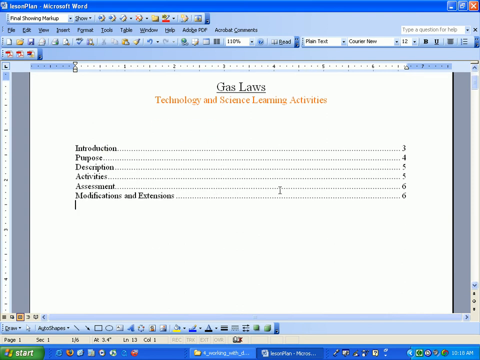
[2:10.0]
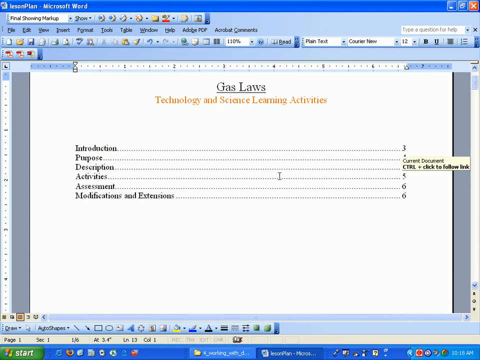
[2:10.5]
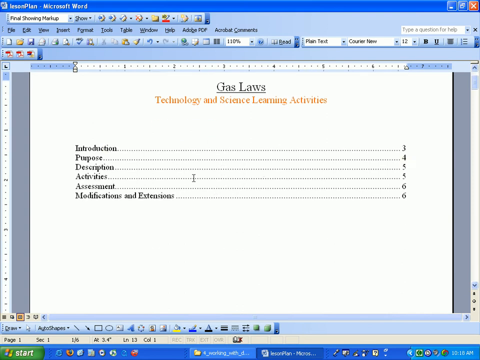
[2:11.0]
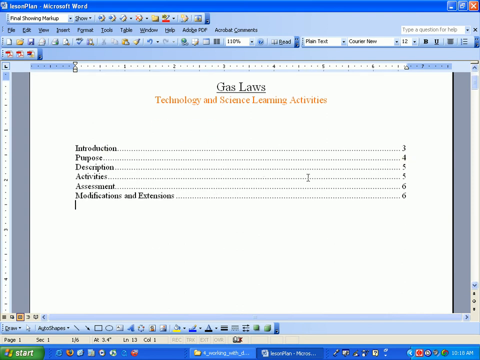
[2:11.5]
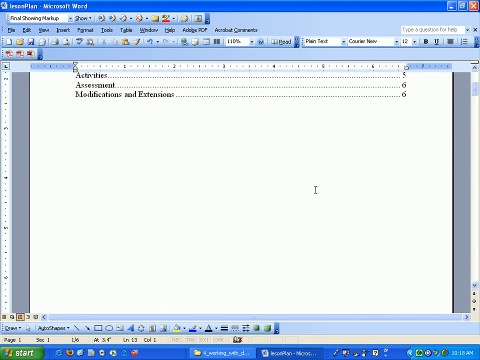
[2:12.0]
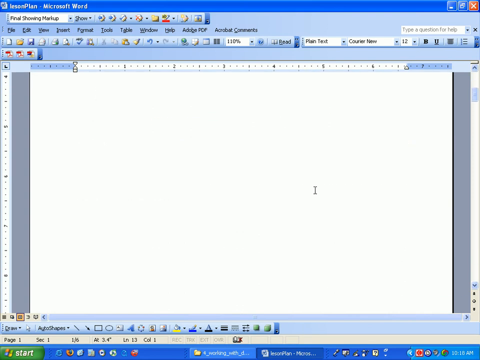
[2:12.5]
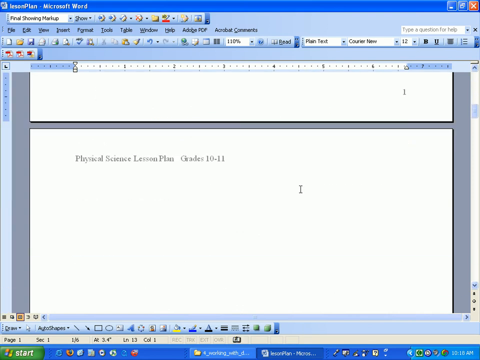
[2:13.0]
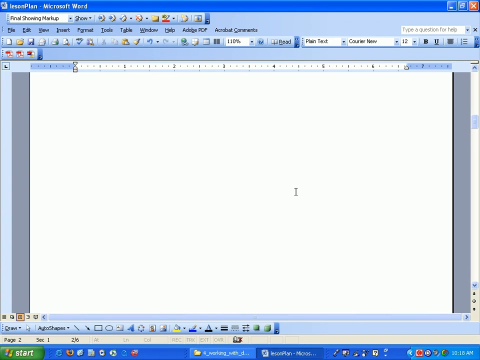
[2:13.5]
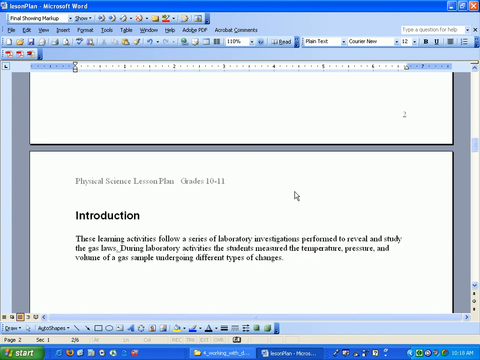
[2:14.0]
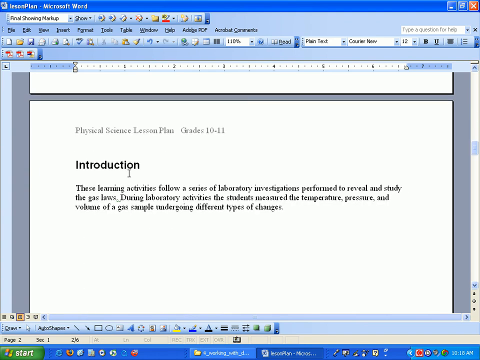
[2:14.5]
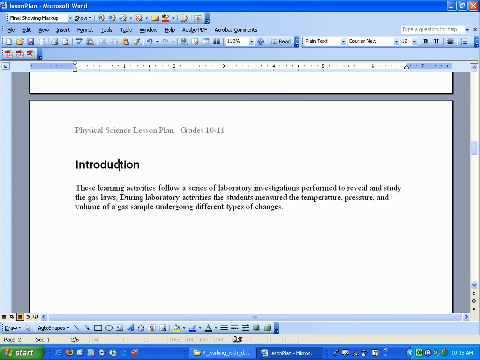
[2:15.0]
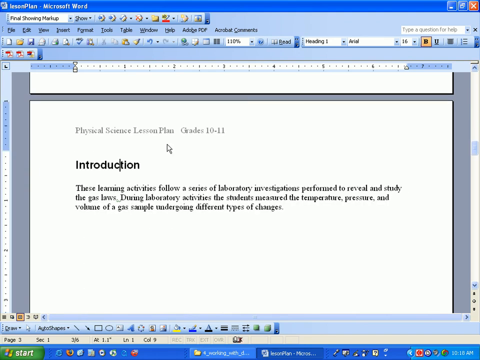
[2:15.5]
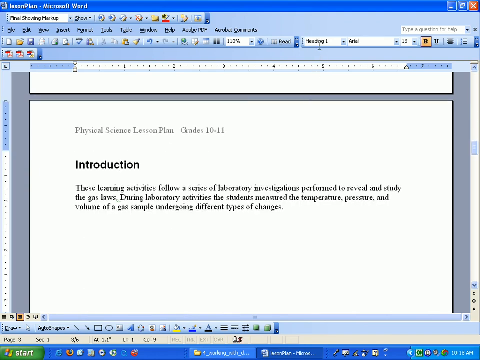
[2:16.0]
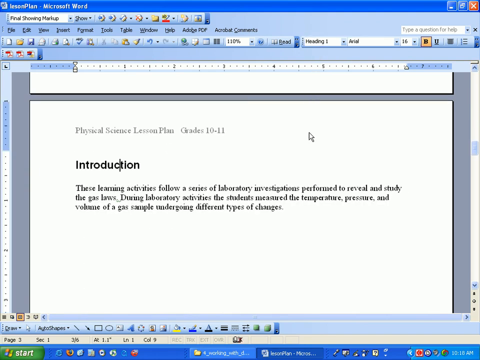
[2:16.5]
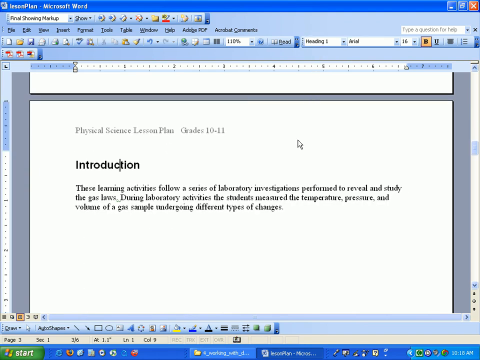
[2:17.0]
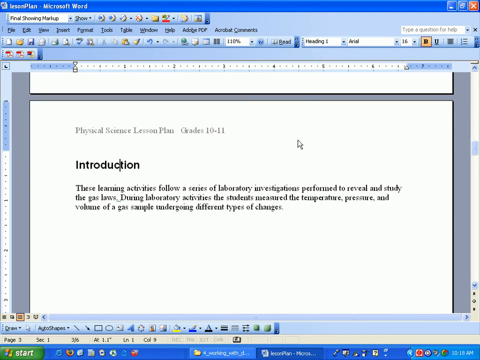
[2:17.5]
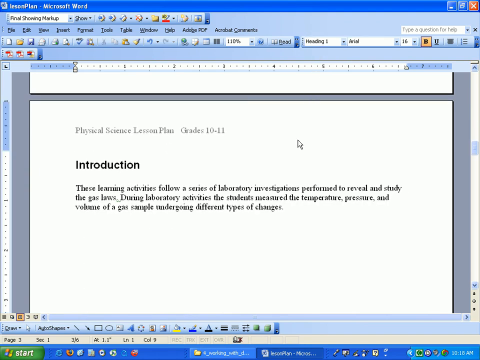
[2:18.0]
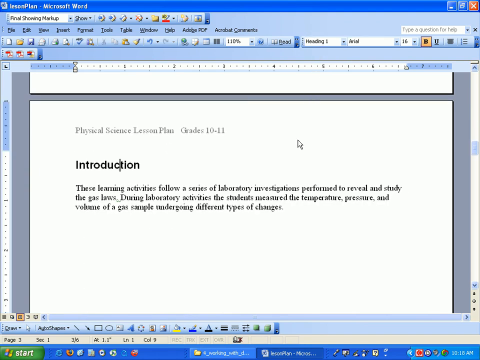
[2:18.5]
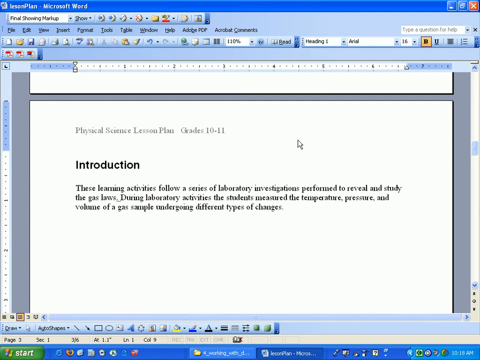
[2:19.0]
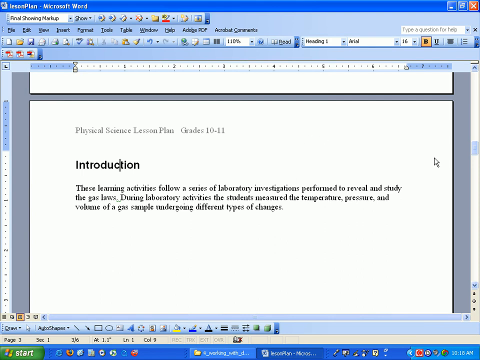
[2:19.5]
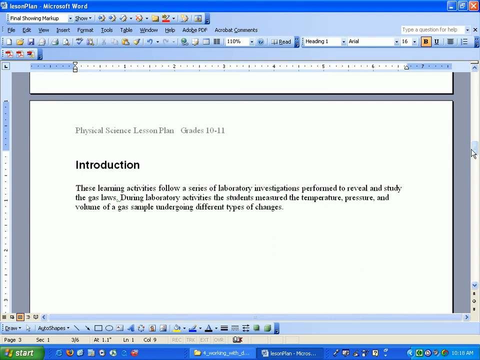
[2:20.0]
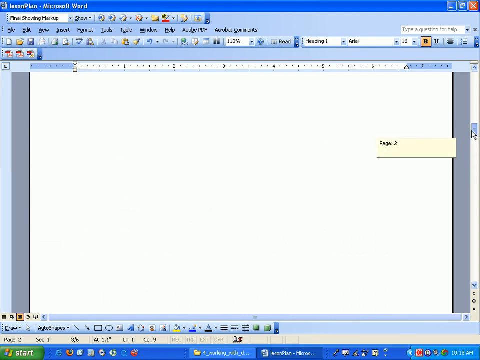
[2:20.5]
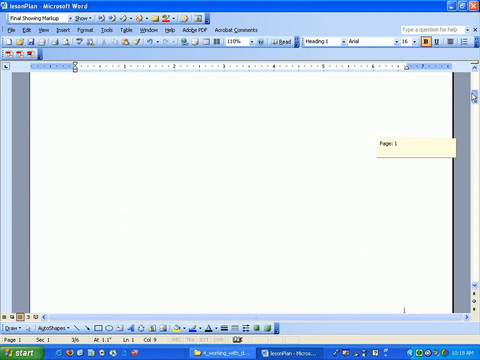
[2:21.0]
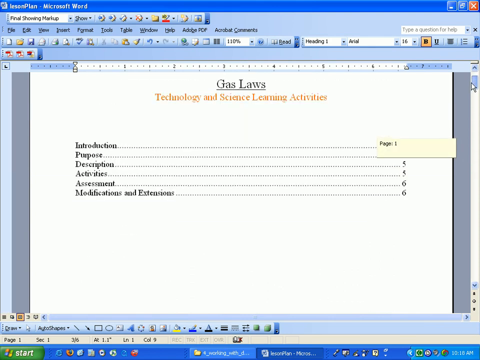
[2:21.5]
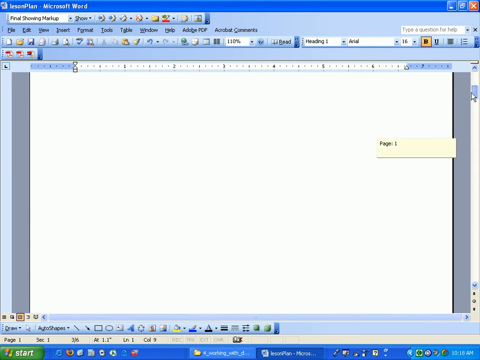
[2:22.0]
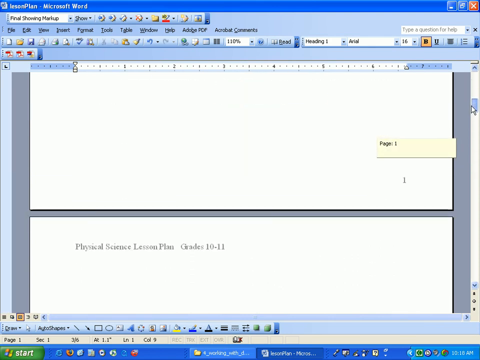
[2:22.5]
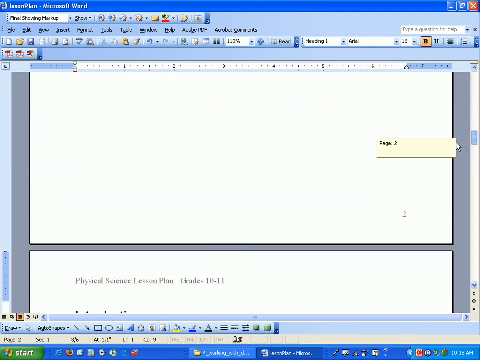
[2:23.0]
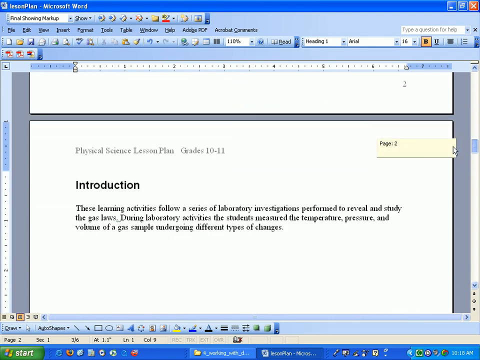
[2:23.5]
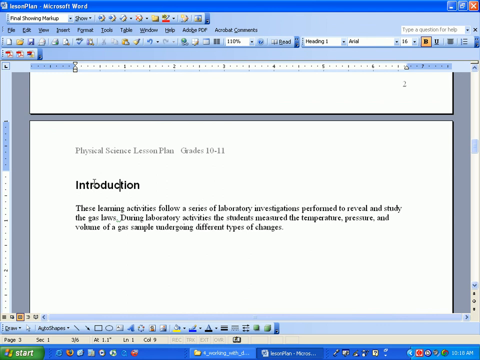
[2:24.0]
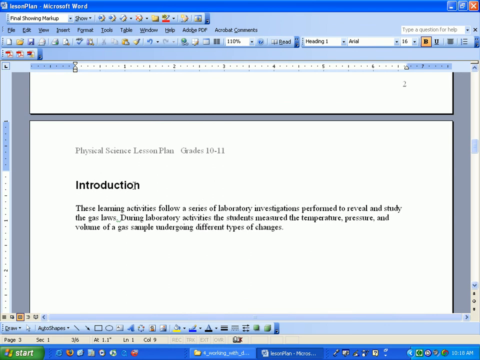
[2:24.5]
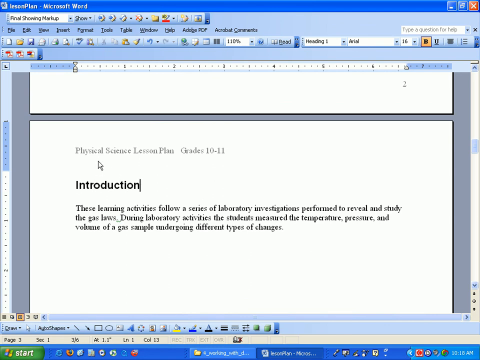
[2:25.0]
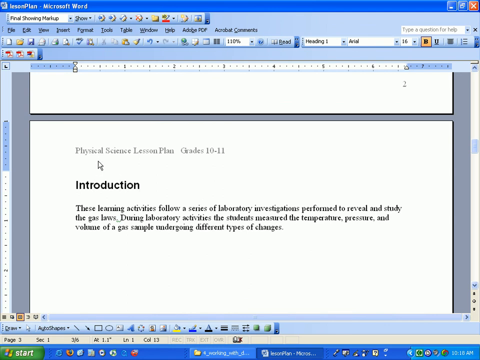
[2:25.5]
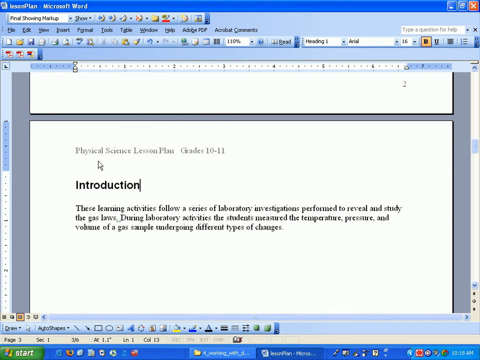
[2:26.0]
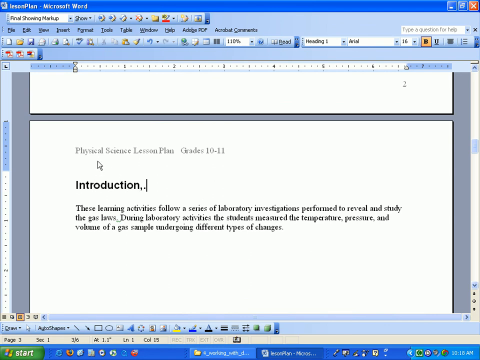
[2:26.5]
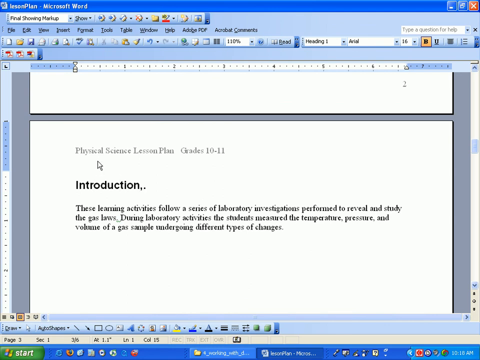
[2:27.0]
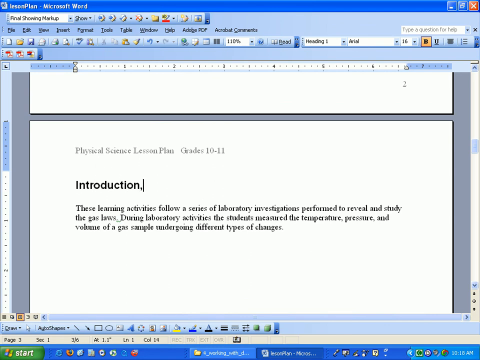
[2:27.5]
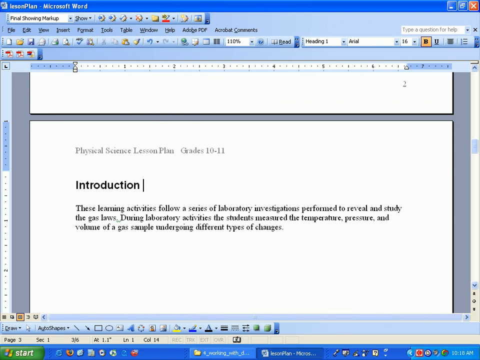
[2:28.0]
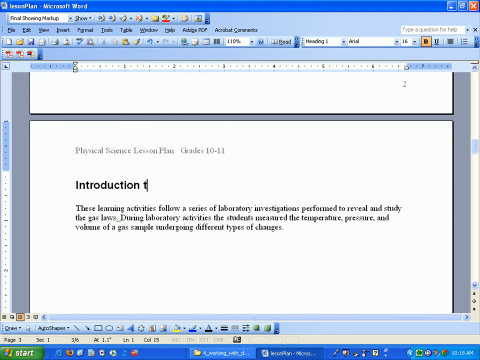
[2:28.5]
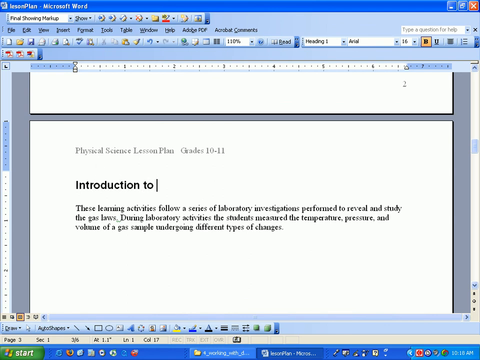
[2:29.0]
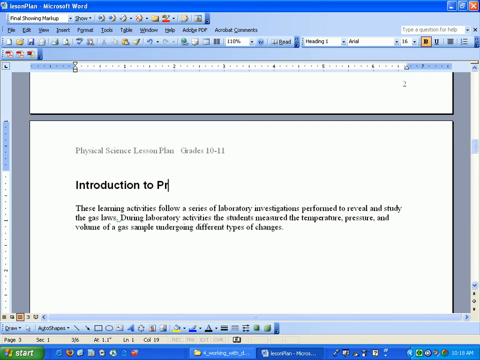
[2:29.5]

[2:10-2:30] The person works on the pages and an introduction, making sure everything is put where it belongs.